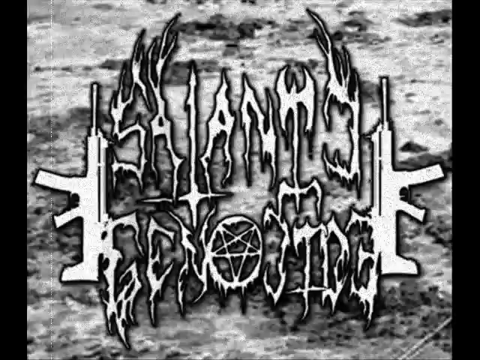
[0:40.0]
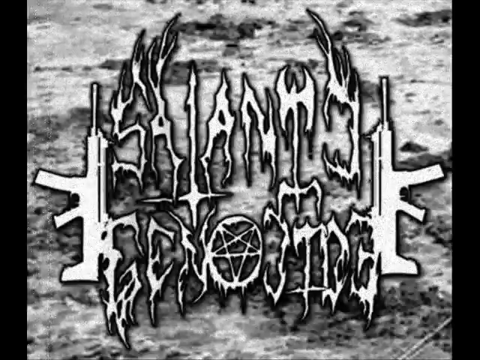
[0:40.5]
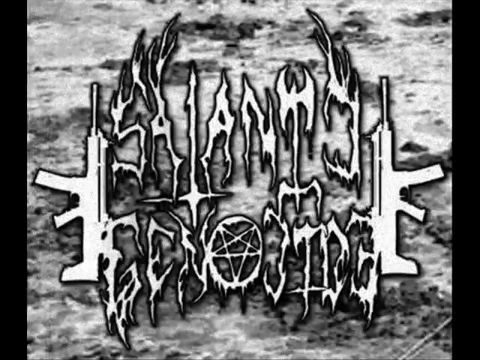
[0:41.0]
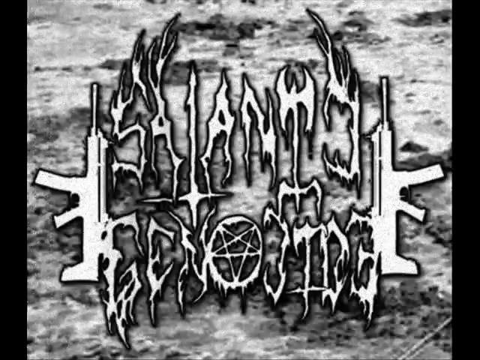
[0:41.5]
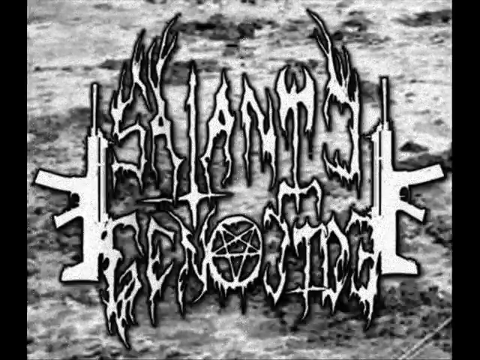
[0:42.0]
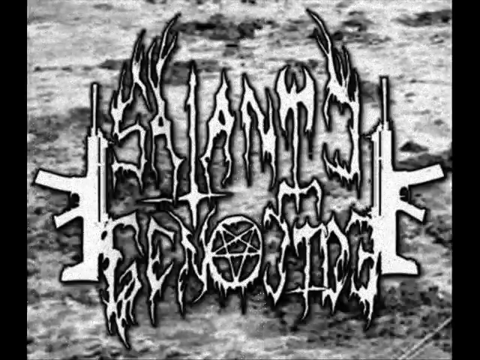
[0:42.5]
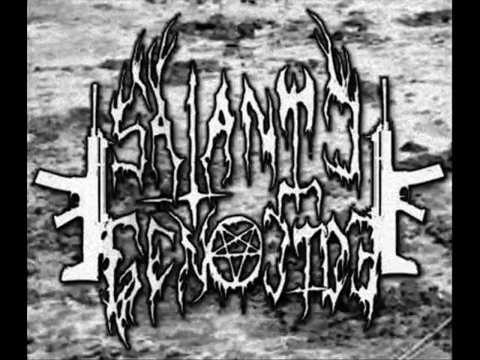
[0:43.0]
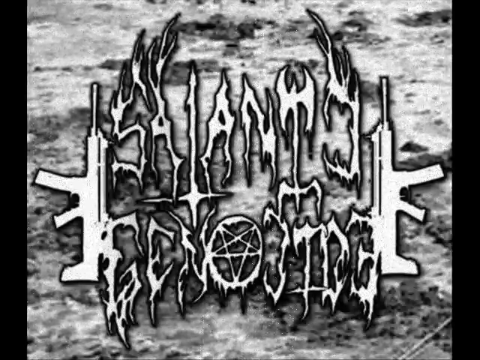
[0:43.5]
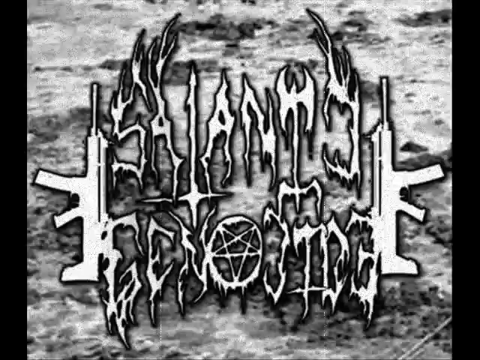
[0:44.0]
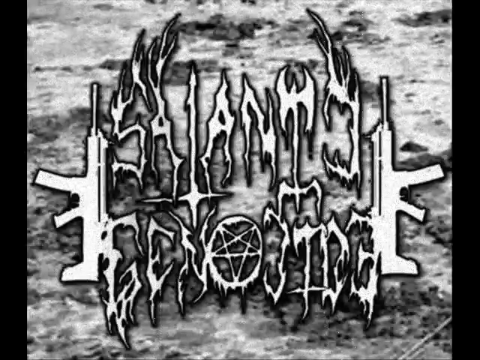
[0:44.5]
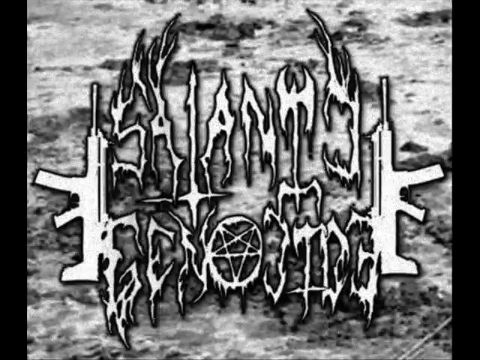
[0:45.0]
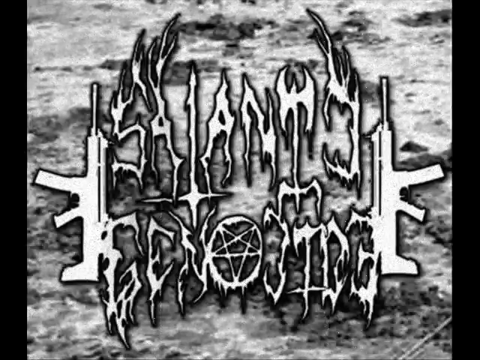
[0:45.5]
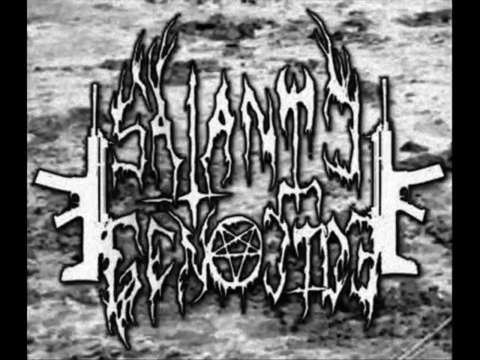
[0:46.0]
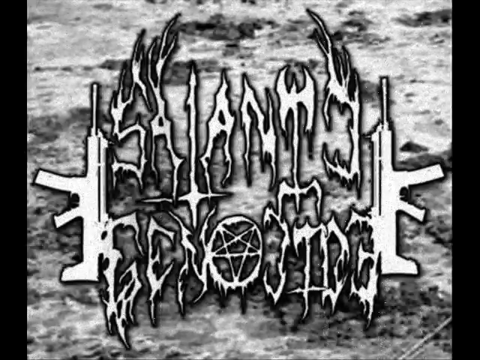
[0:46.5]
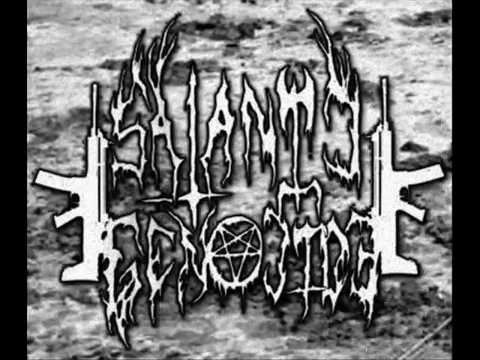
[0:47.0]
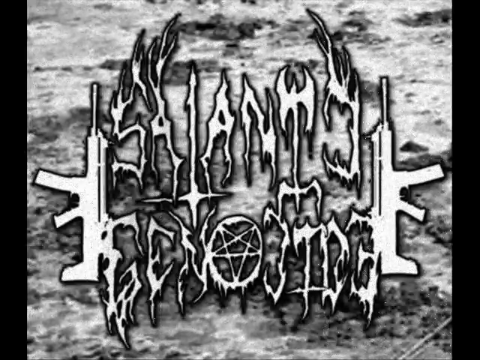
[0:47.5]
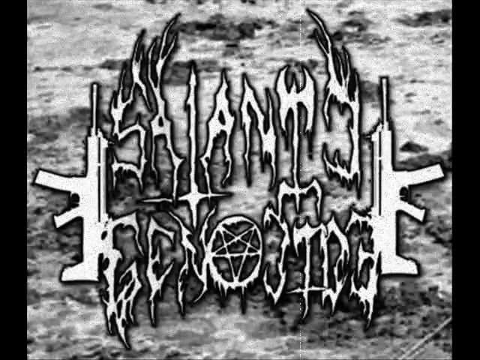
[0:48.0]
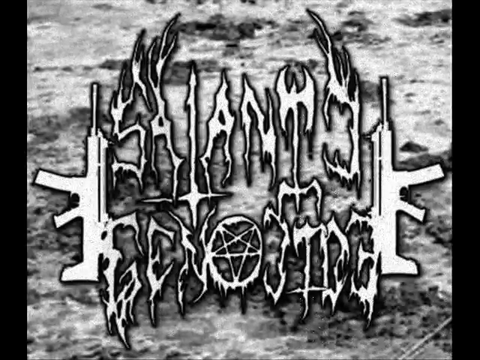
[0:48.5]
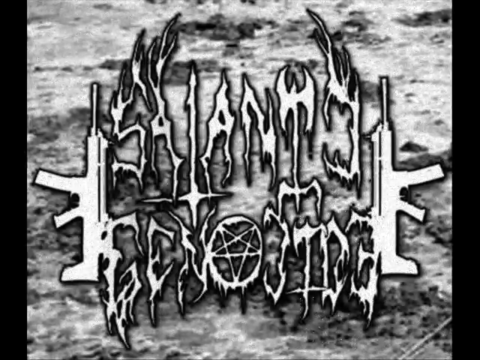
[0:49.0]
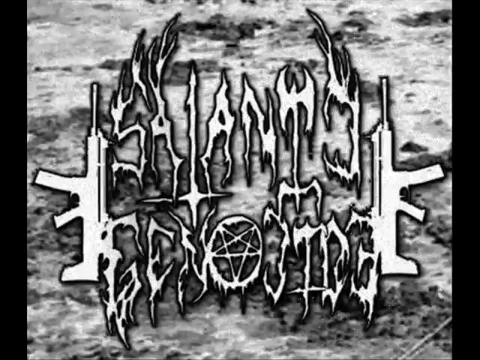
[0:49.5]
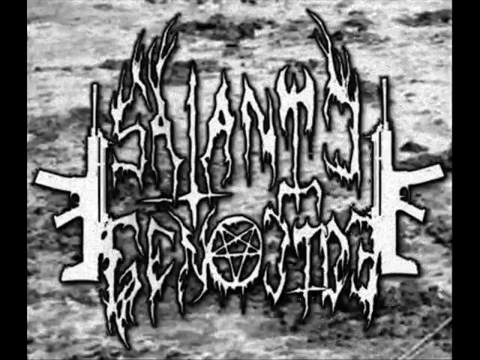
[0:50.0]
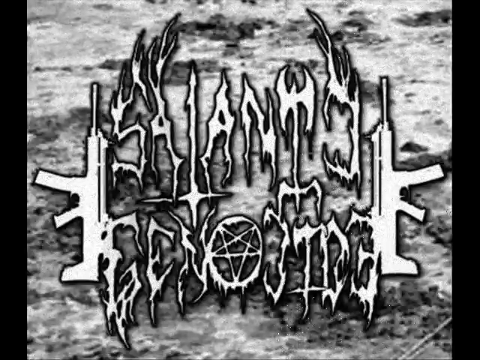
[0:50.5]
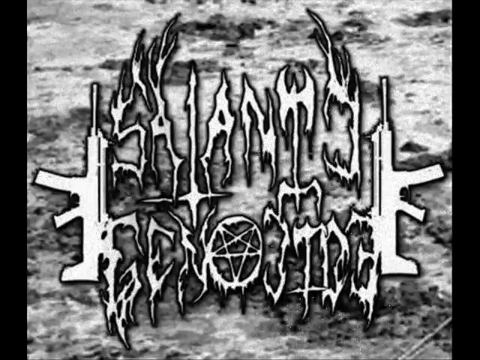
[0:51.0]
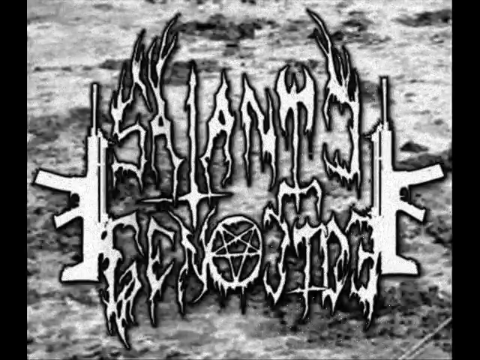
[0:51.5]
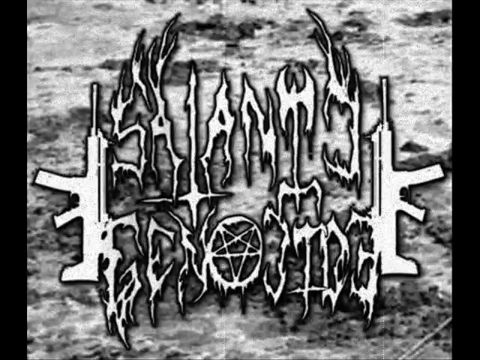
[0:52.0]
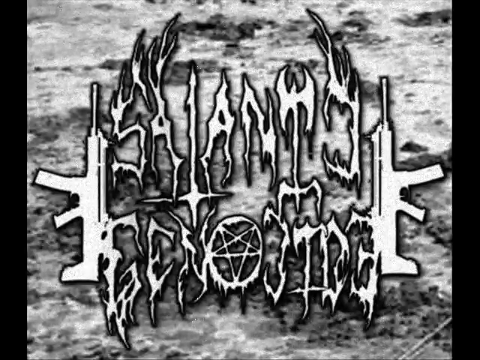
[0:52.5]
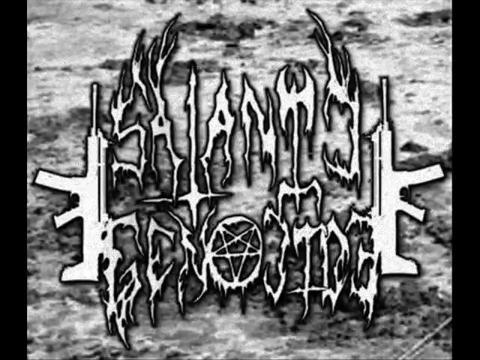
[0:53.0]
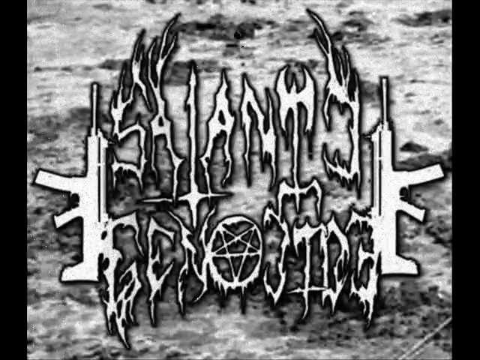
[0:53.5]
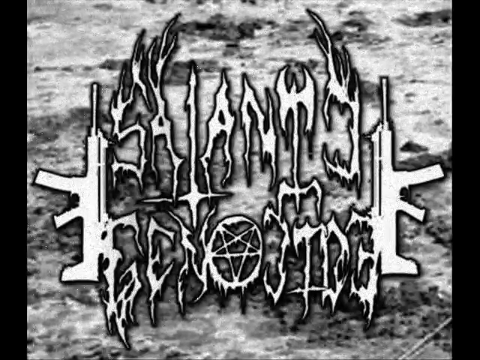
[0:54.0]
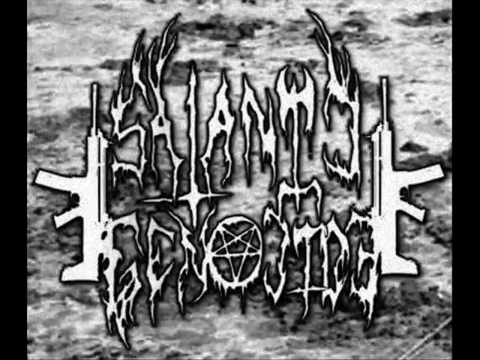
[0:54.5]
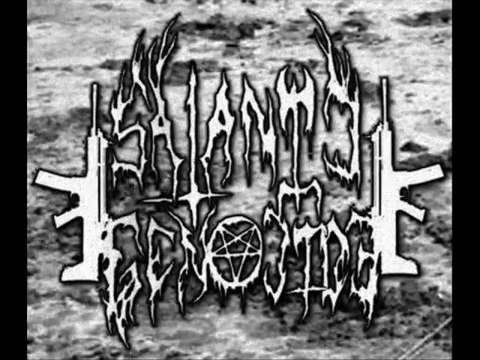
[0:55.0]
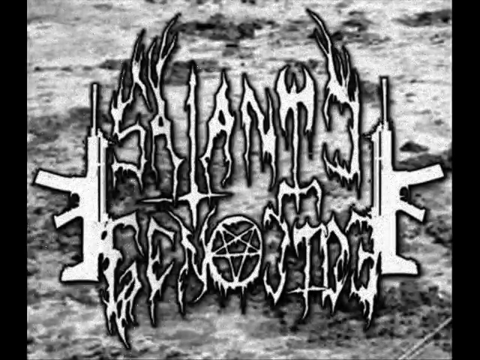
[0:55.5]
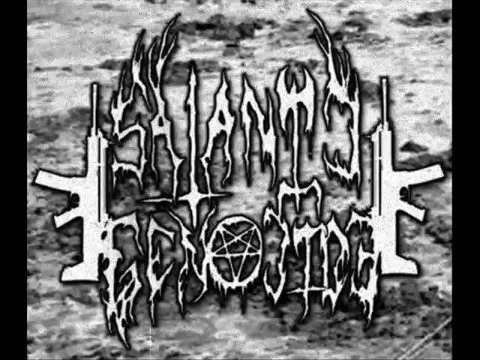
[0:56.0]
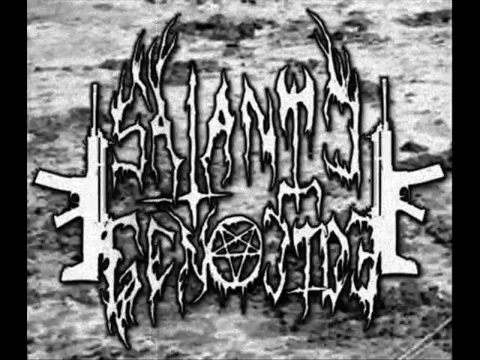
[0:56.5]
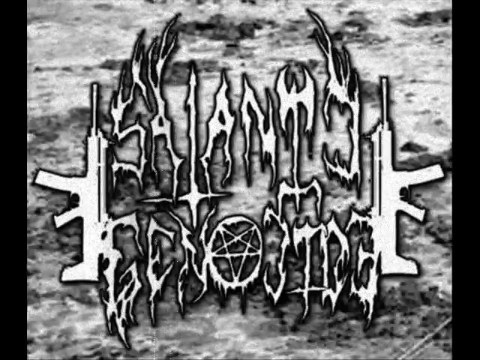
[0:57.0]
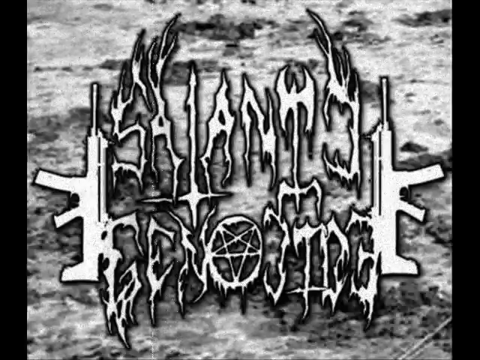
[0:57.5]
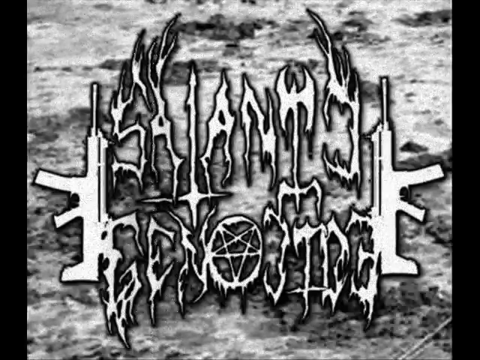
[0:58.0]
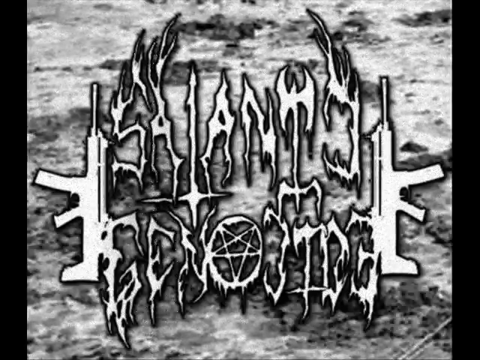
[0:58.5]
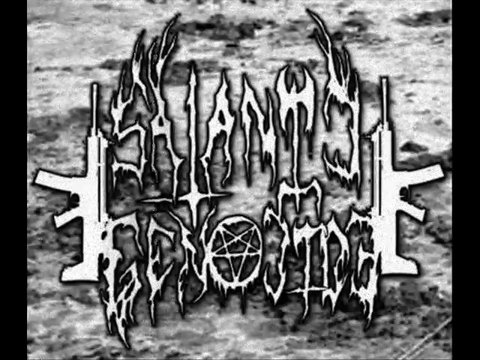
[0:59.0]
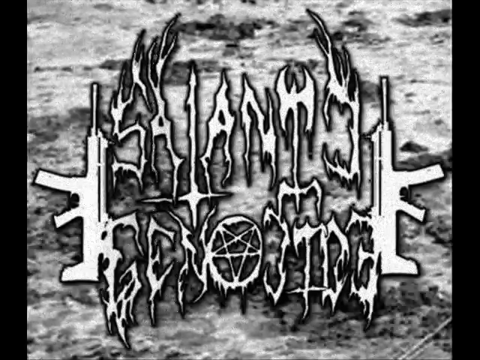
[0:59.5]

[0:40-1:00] The same image remains, with no person or individual of any kind appearing.